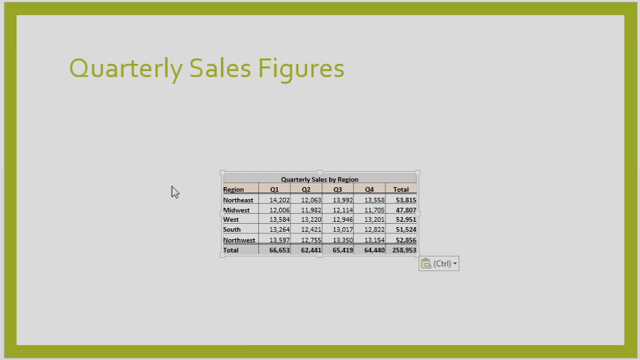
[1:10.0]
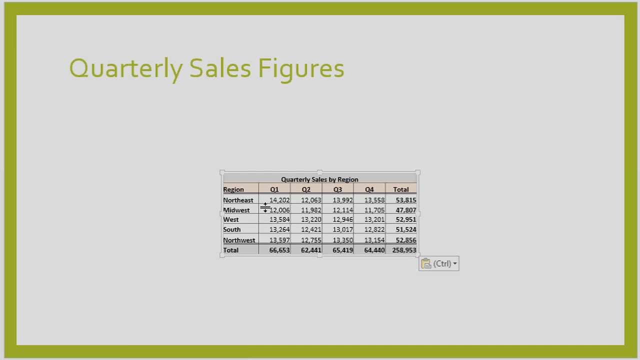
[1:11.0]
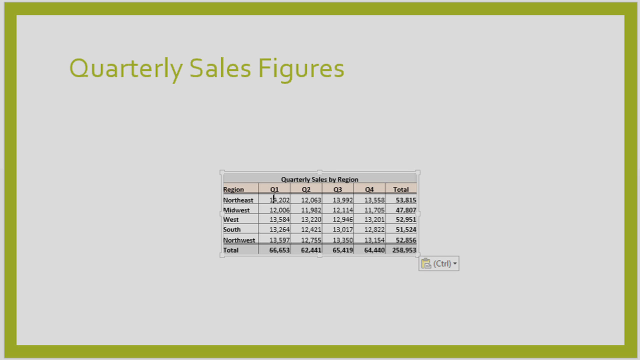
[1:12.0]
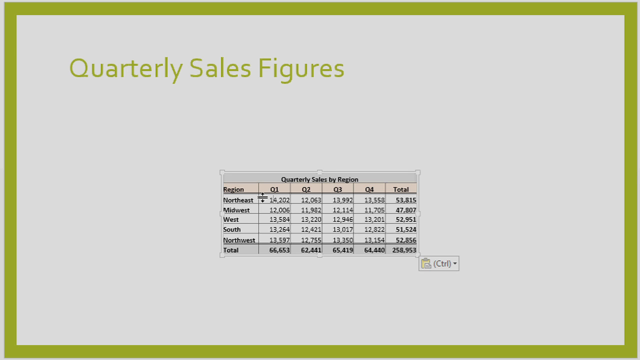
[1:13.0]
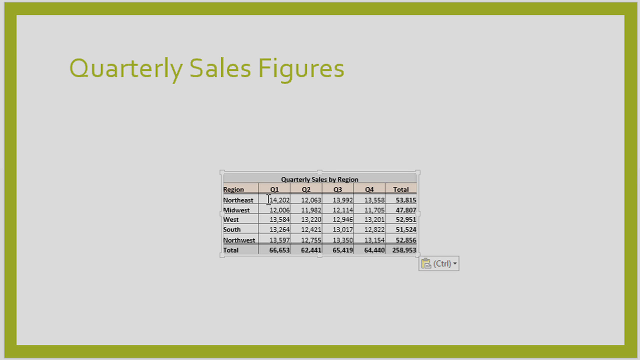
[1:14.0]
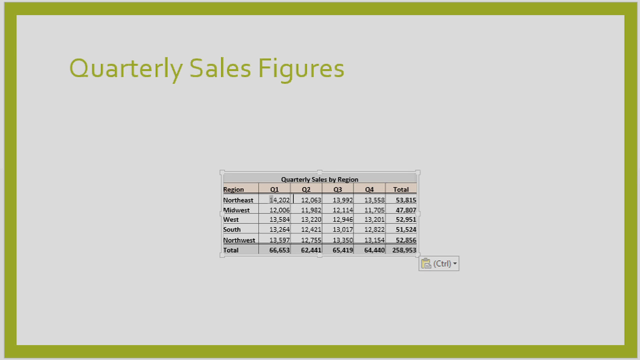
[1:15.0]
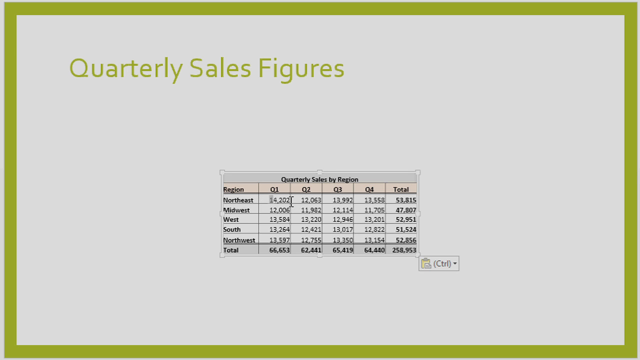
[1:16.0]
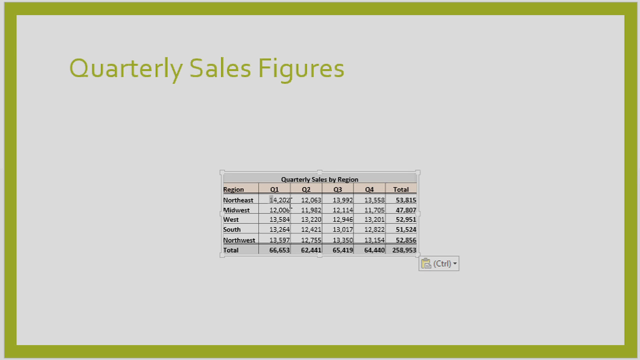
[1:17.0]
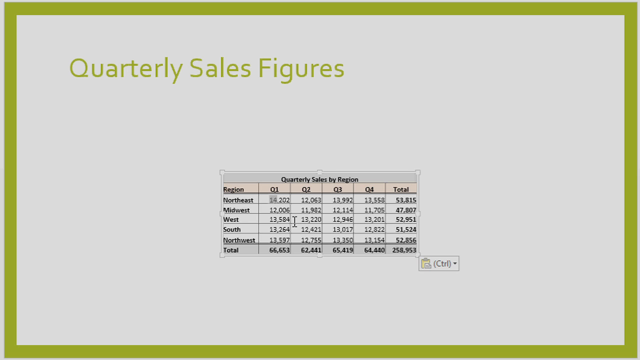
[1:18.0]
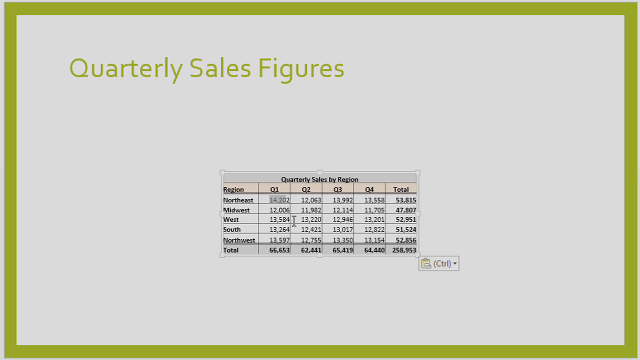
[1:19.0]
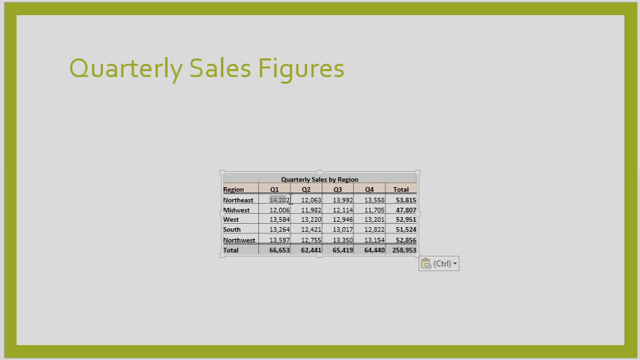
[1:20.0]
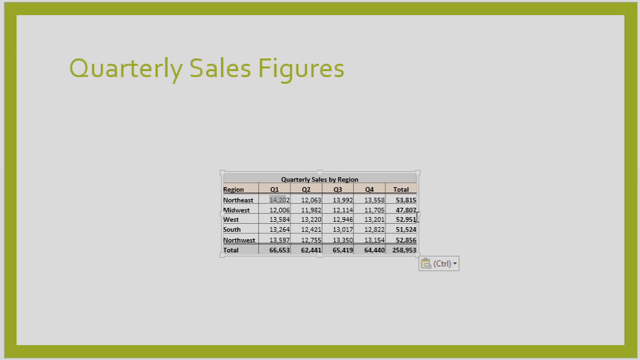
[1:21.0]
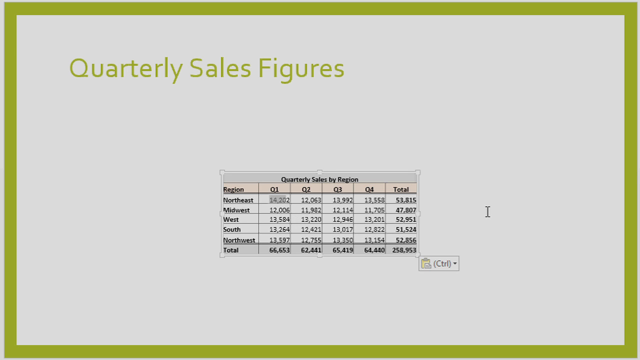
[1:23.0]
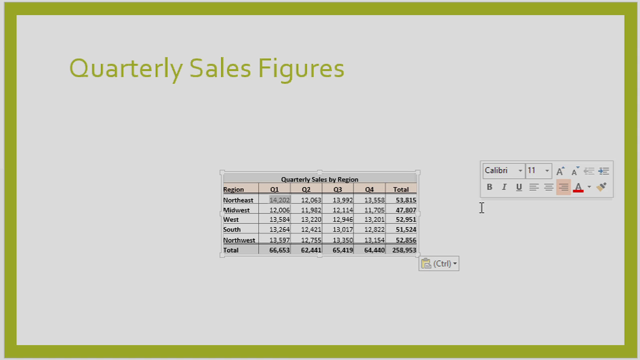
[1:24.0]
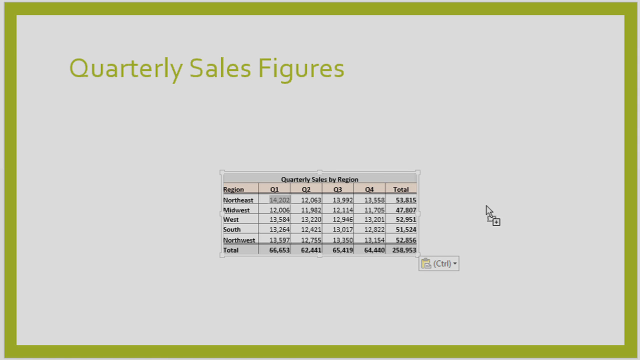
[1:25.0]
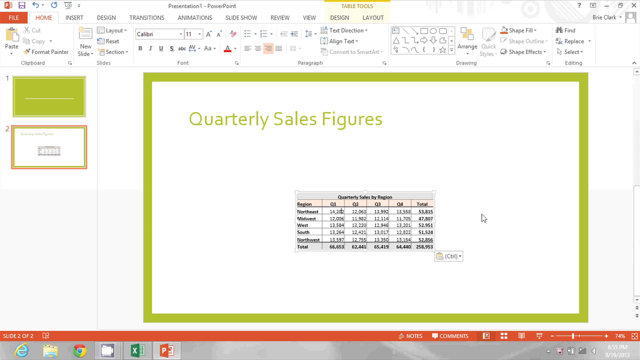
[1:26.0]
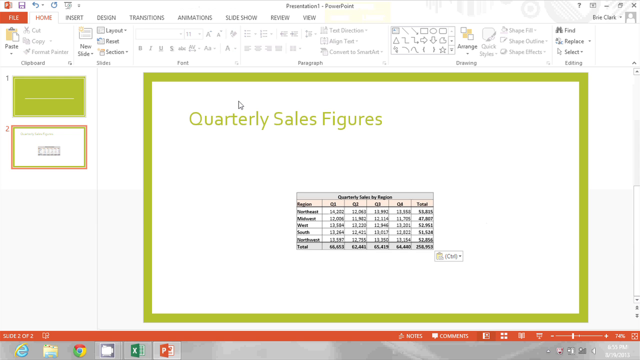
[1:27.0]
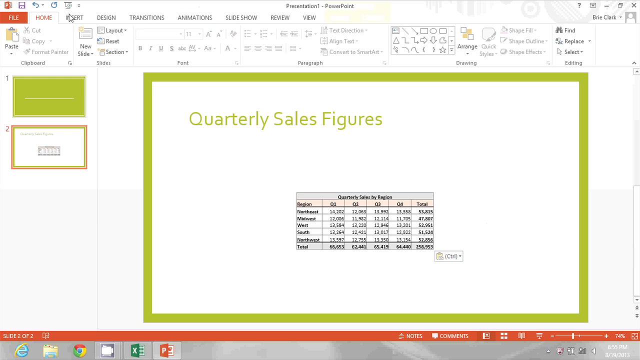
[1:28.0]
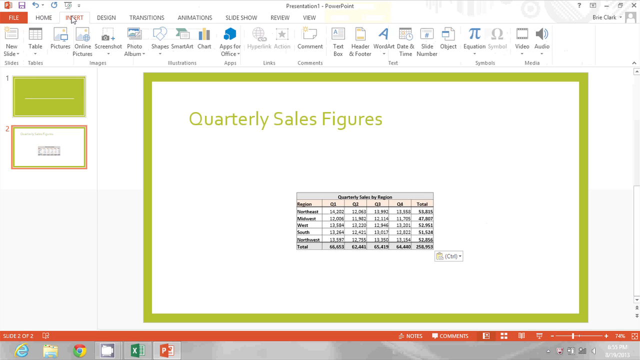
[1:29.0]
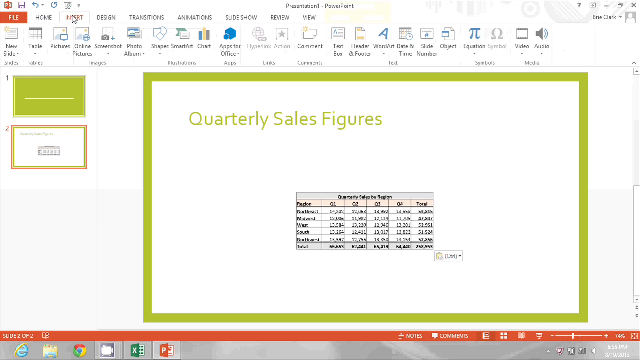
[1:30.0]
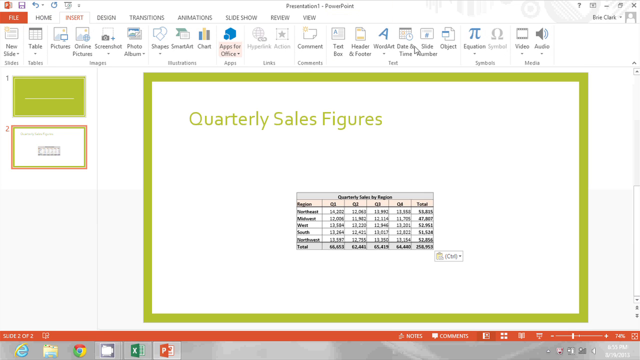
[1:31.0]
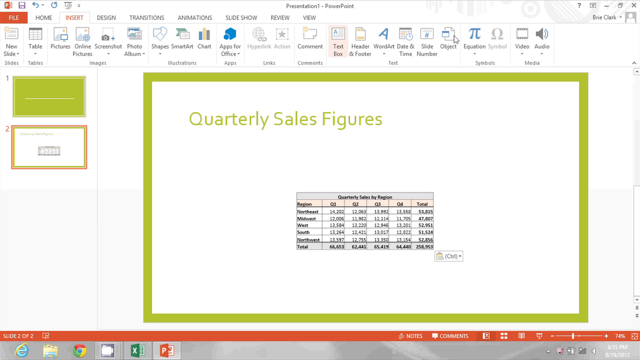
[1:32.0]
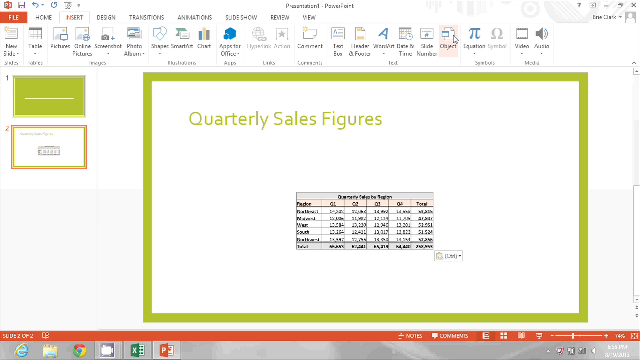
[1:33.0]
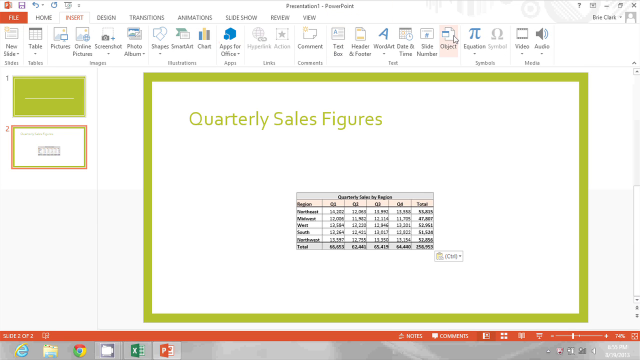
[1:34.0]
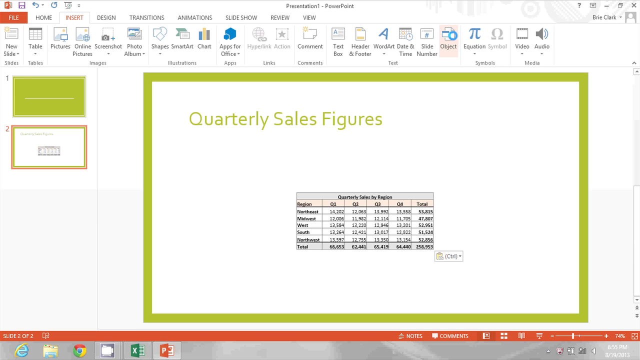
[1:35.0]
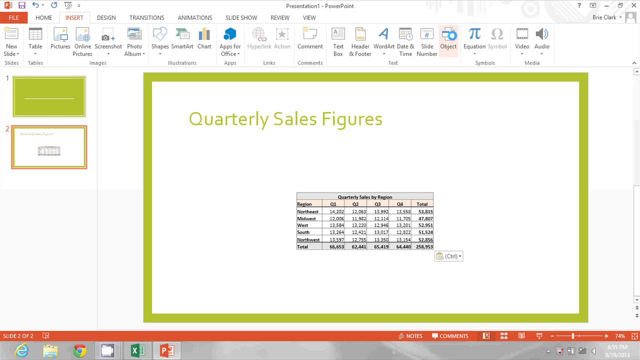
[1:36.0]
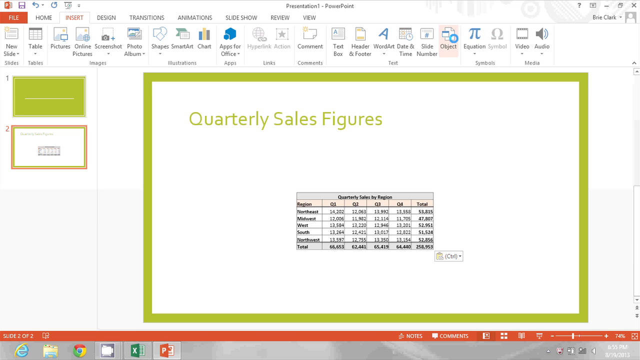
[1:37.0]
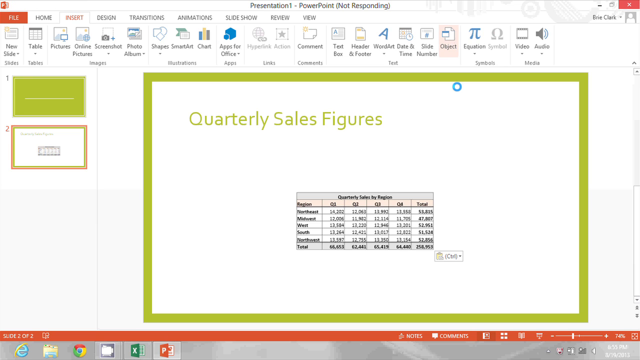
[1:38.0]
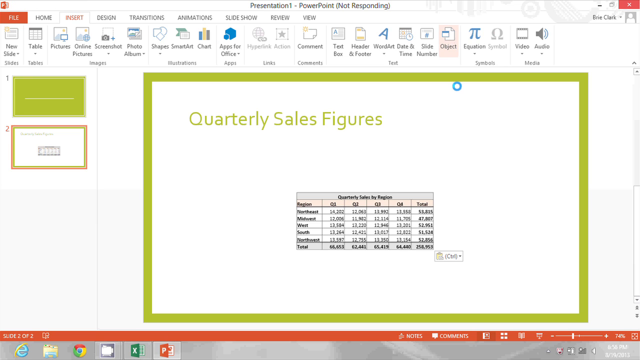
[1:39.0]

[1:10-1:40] A page reads "quarterly sales figures" in lime green, matching the border that goes all around the sheet. In the middle is a numerical graph of quarterly sales by region, listing the locations on the left, numbers for the first, second, third and fourth quarters, and a total on the right-hand side. A cursor moves around the screen, and clicking the second choice in the left column gives another view of the quarterly sales figures. A very small box at the lower right of the pop-up with the numerical figures reads "control" in parentheses. The cursor keeps moving, and another pop-up box appears on the right and disappears as quickly as it appeared.